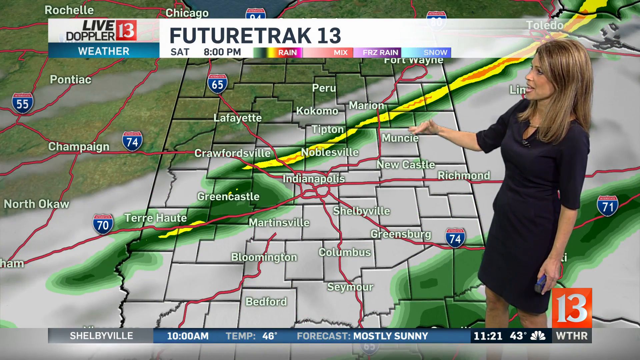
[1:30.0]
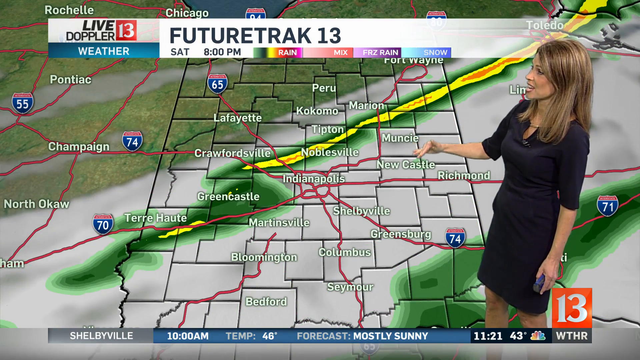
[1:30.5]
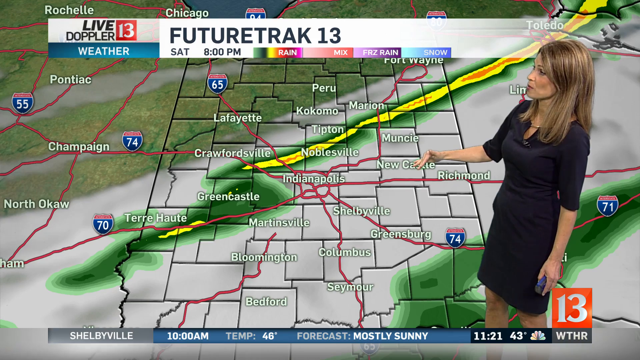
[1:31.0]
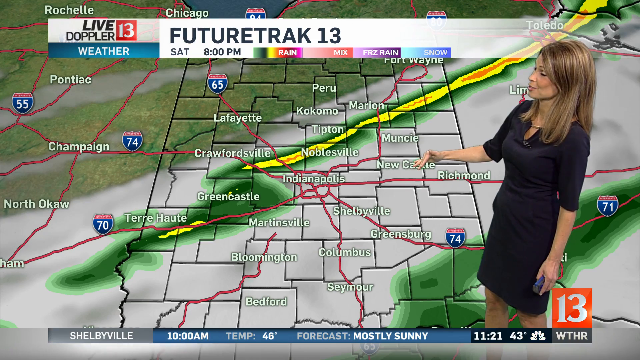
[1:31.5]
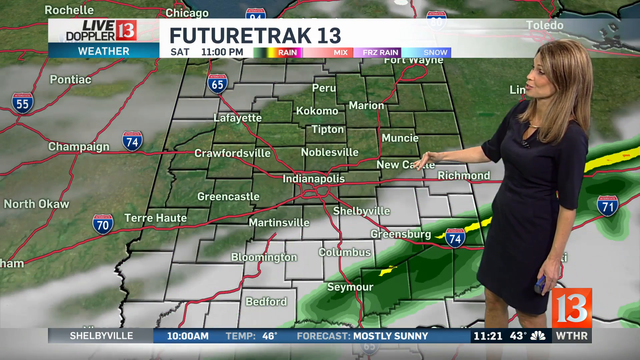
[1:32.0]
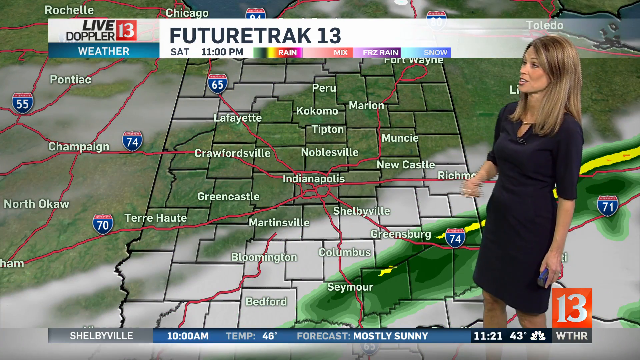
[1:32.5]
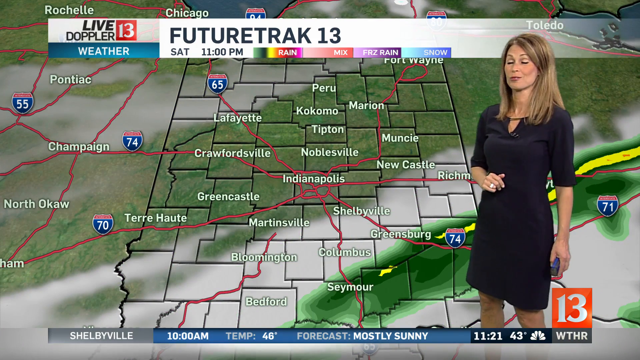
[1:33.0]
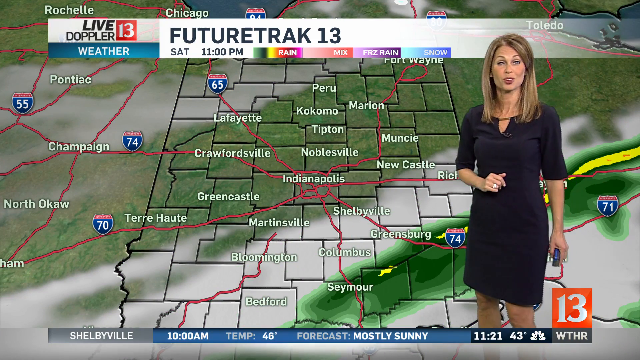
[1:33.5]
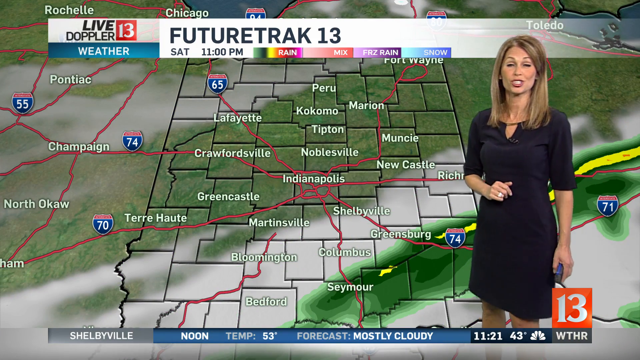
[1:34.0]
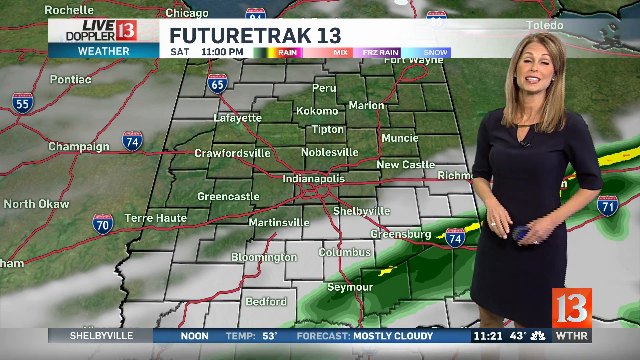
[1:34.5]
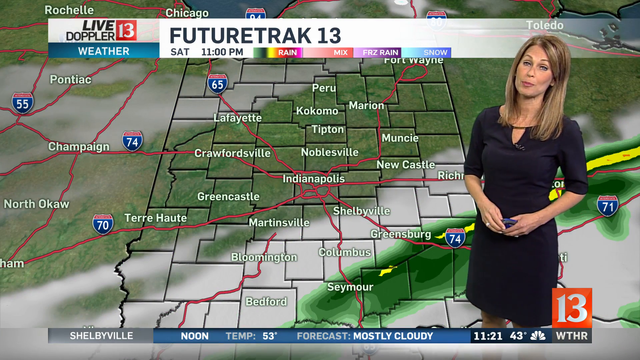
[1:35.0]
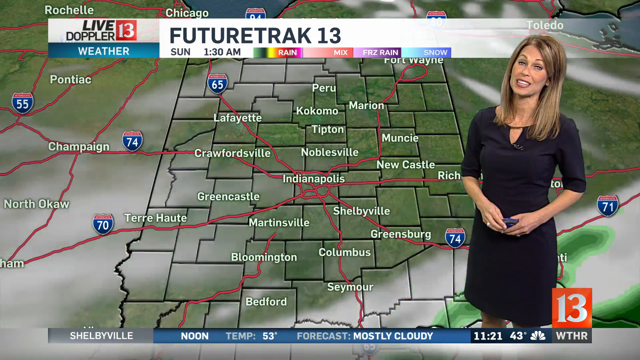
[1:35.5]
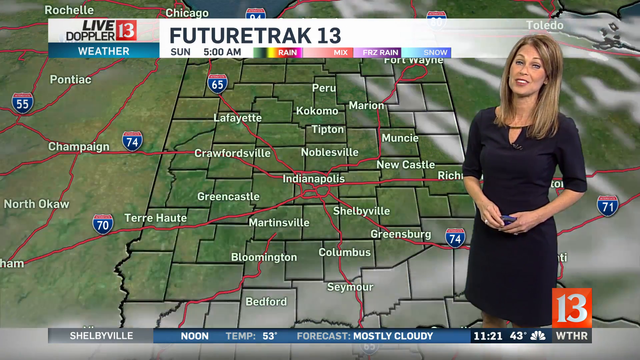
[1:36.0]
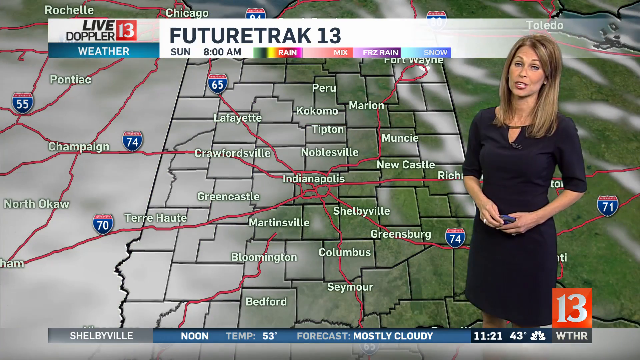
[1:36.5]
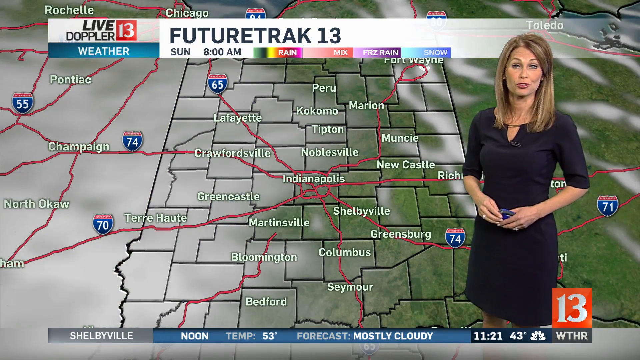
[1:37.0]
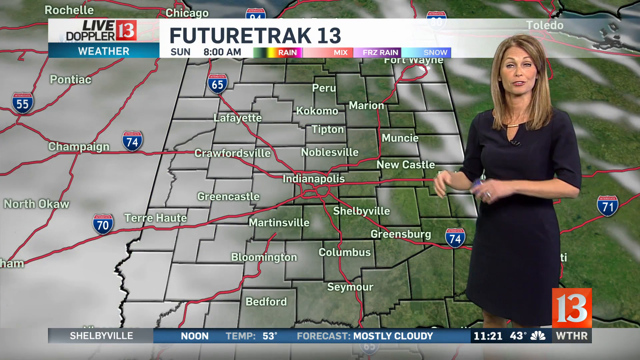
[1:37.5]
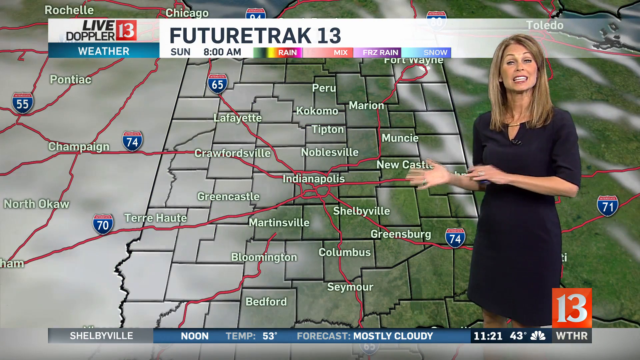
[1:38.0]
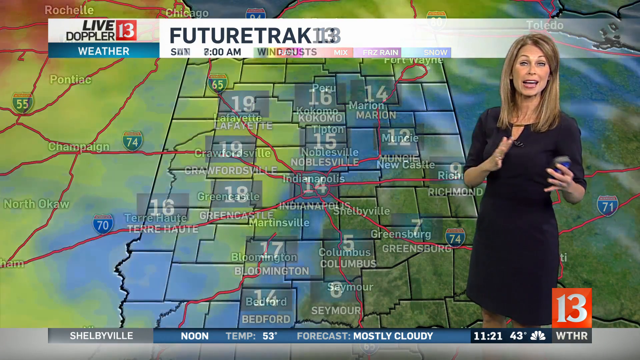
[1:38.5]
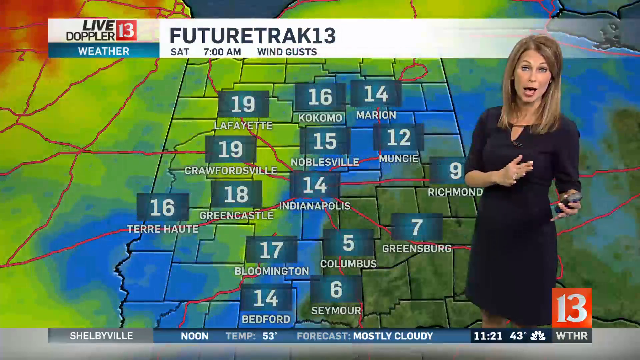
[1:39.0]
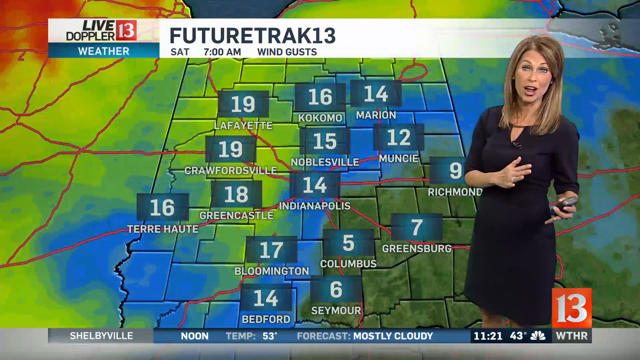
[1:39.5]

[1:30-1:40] A "futuretrak 13" map for Saturday 8 p.m. shows cities such as Champaign, Greencastle, Bloomington and Bedford, and in the middle of the screen is what looks like a diagonal line that is mostly yellow, outlined in green, with a bit of orange inside it. On the right side of the screen the weather reporter points at areas such as Tipton, Kokomo and Peru. The display moves from Saturday to Sunday, and then more futuretrak appears, this time in degrees: Kokomo at 16, Muncie at 12 and Greensburg at 7.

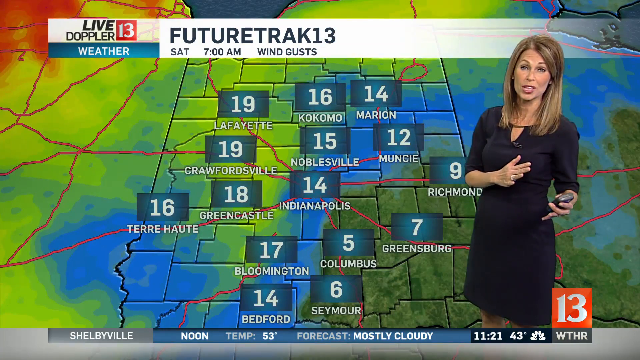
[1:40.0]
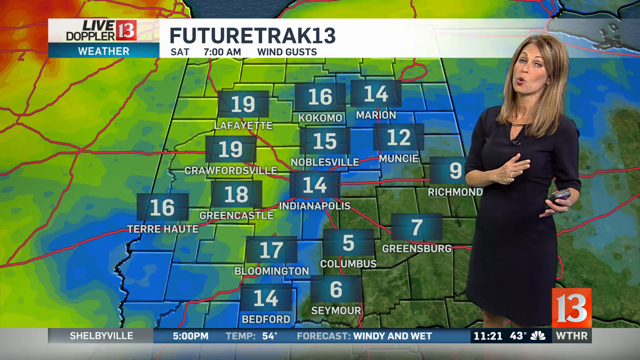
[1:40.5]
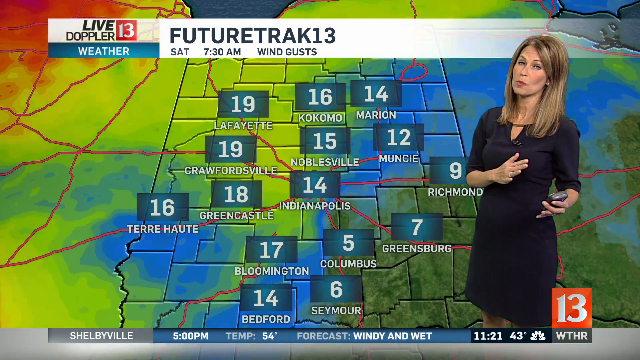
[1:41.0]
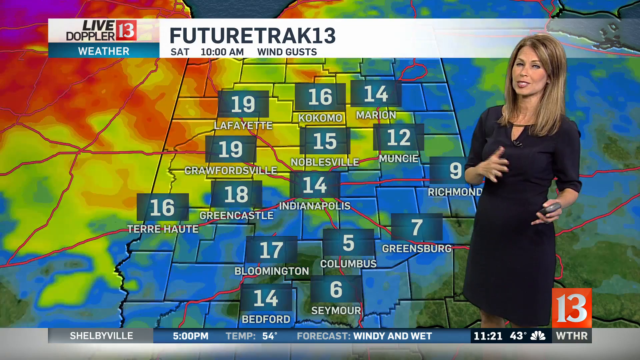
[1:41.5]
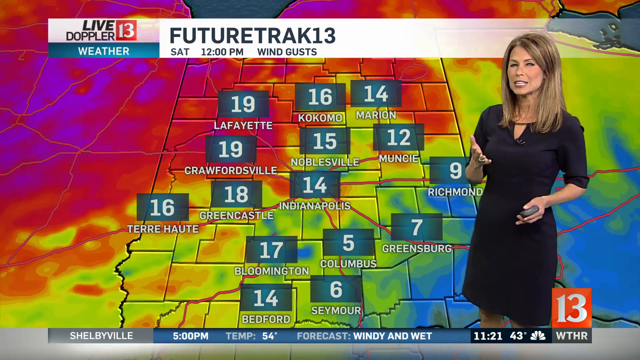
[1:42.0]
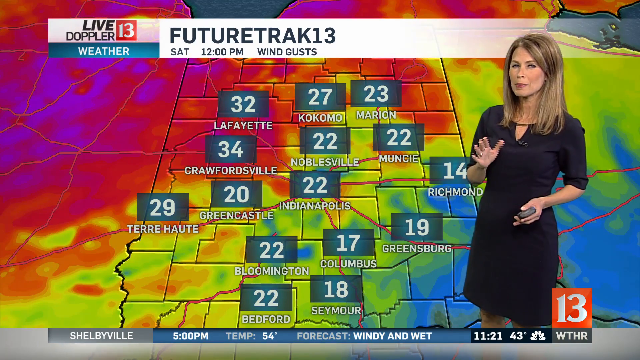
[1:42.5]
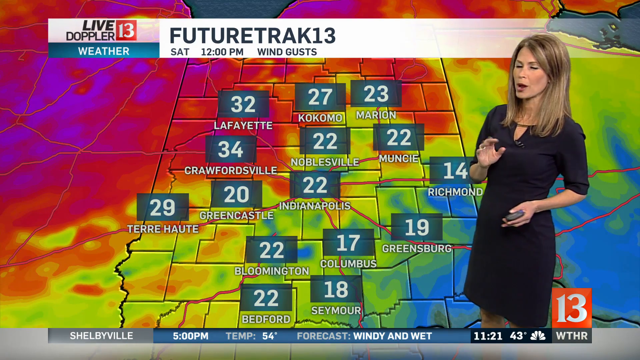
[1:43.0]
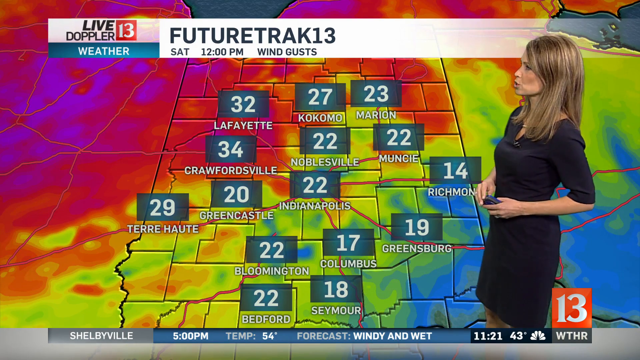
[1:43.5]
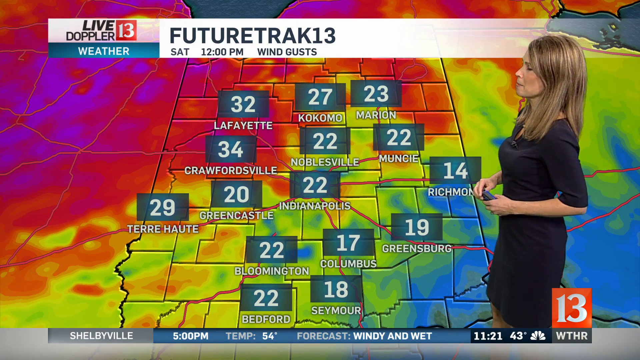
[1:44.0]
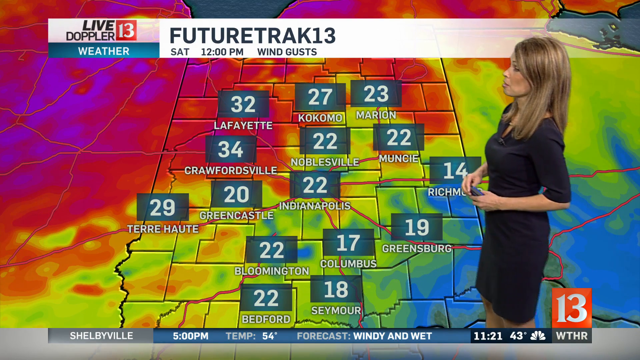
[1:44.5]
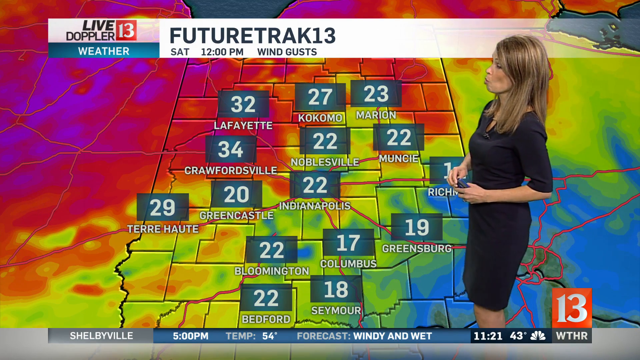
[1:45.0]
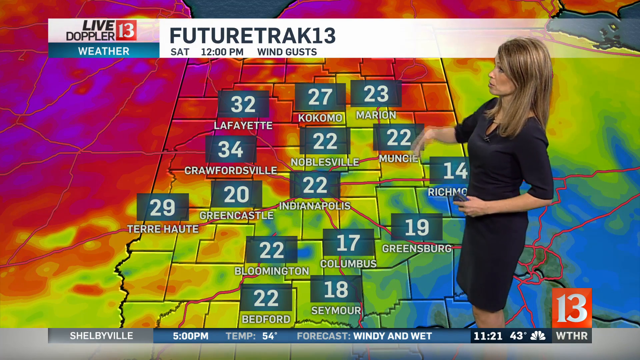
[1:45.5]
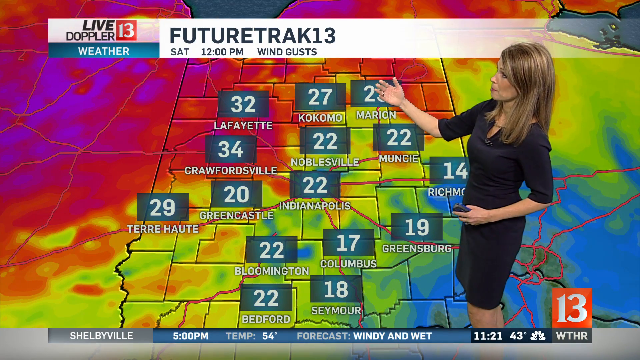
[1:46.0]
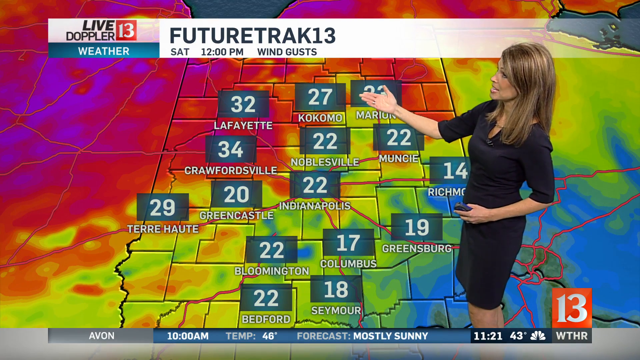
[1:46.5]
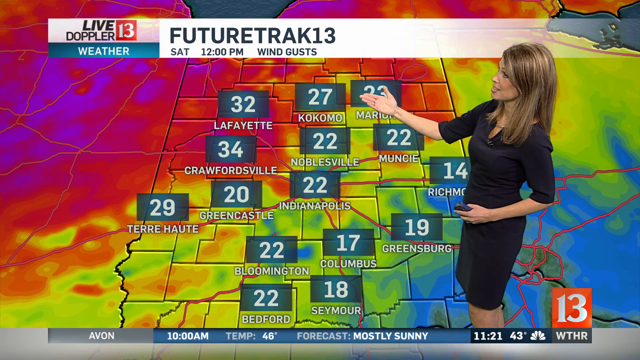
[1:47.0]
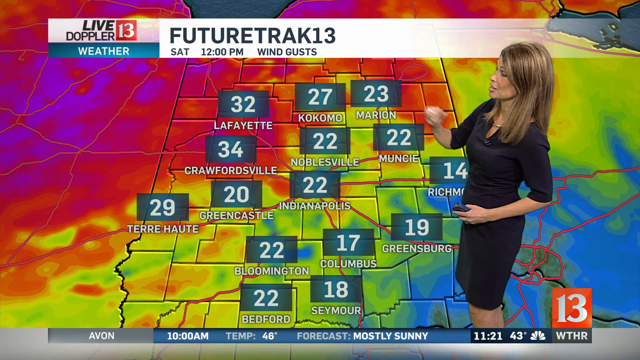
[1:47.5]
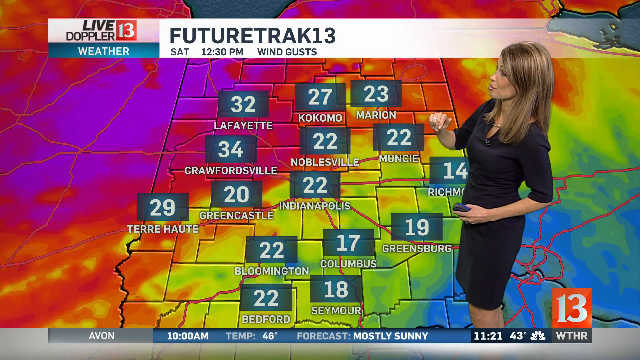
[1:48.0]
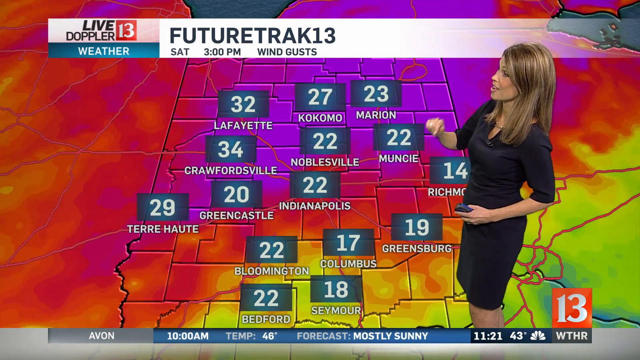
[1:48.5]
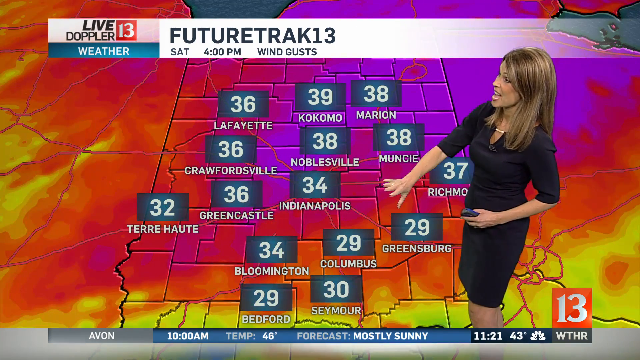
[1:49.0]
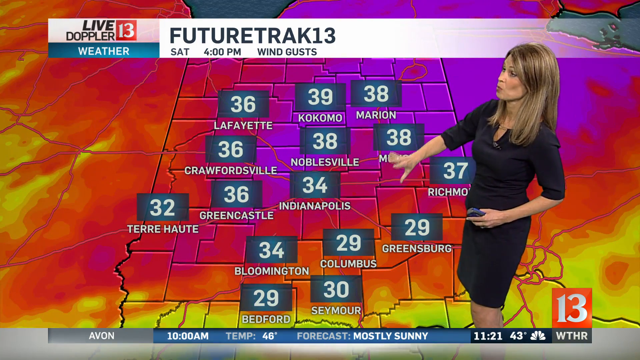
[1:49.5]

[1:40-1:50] The futuretrak for Saturday 7 a.m. shows wind gusts, with degrees for several areas: Kokomo 16, Marion 14, Lafayette 19, Crowfordsville 19, Noblesville 15, Muncie 12, Terre Haute 16, Greencastle 18, Indianapolis 14, Richmond 9, Bloomington 17, Columbus 5, Greensburg 7, Bedford 14 and Seymour 6. The news reporter continues reporting on it.